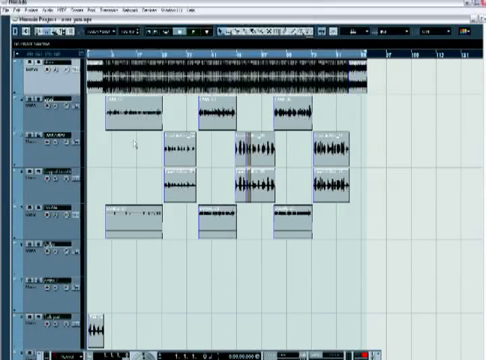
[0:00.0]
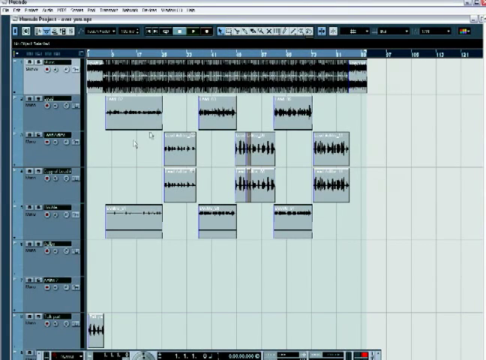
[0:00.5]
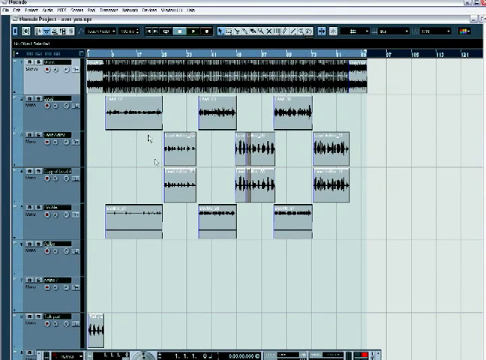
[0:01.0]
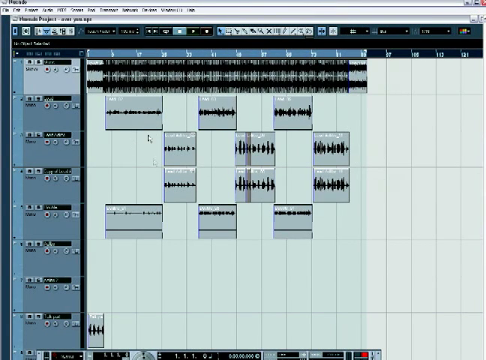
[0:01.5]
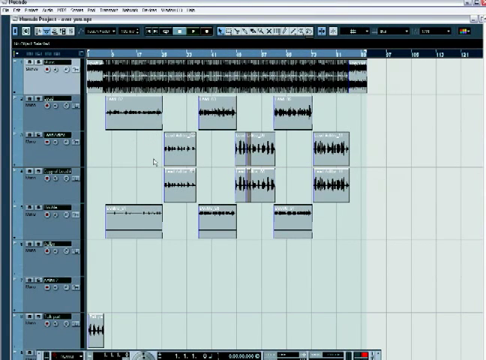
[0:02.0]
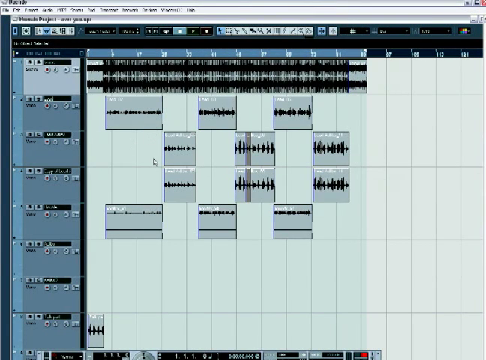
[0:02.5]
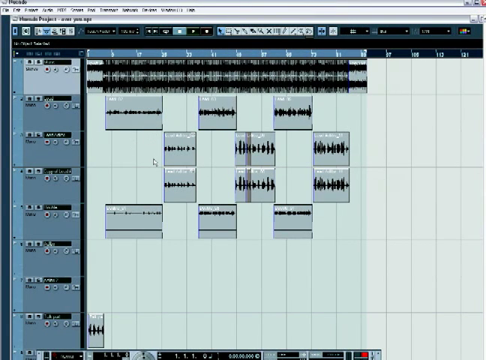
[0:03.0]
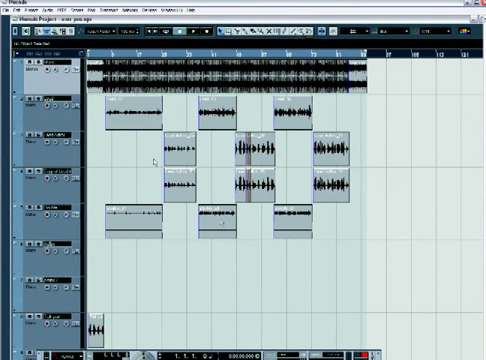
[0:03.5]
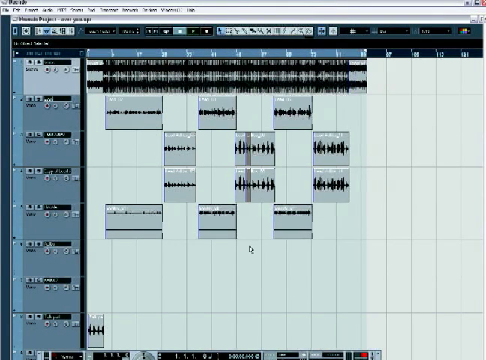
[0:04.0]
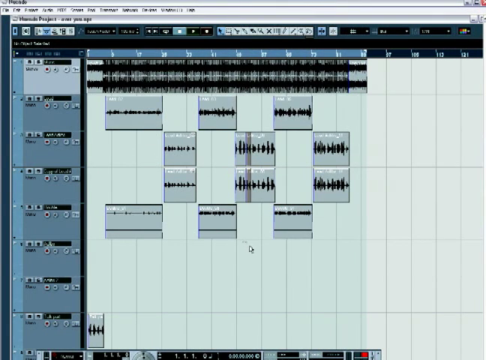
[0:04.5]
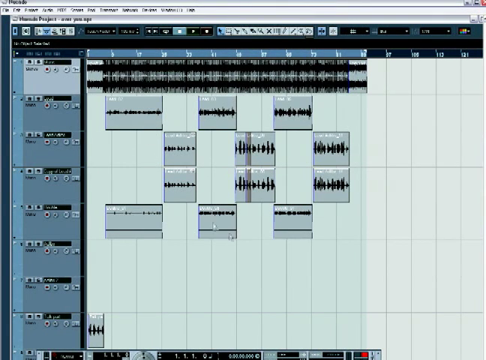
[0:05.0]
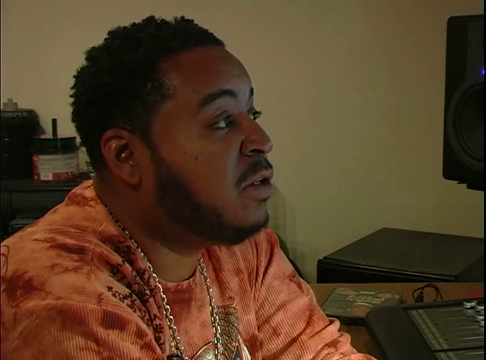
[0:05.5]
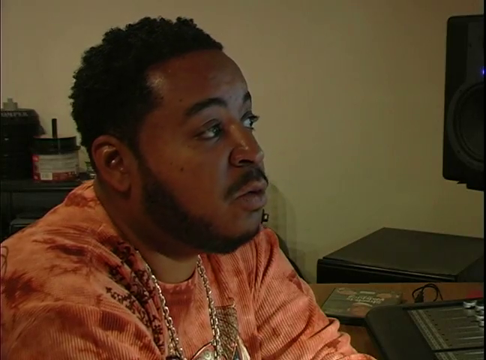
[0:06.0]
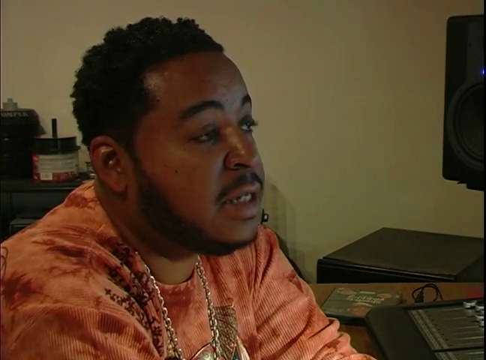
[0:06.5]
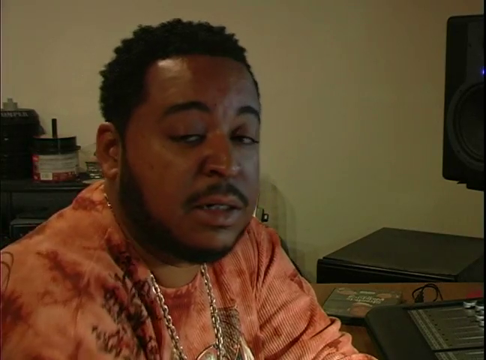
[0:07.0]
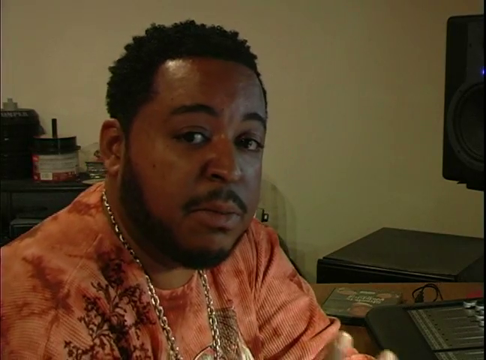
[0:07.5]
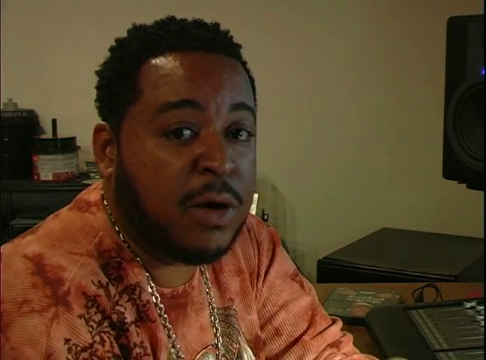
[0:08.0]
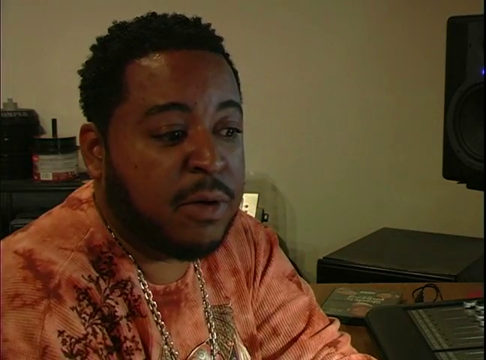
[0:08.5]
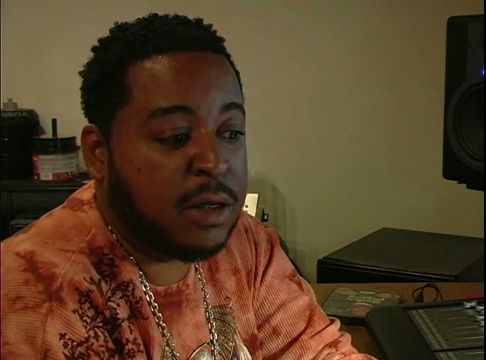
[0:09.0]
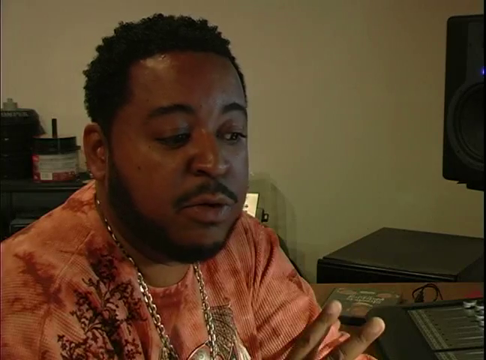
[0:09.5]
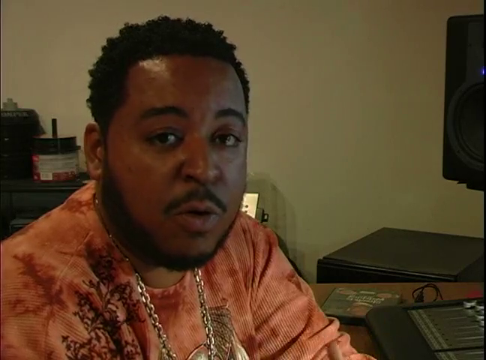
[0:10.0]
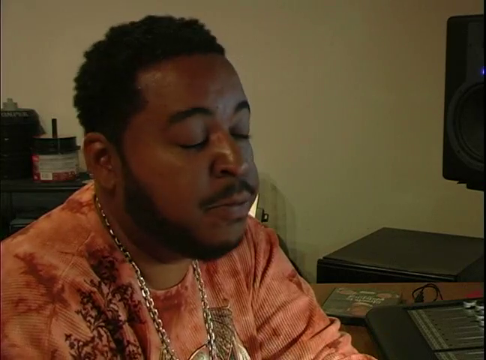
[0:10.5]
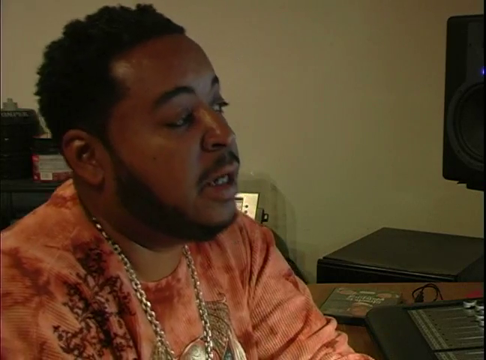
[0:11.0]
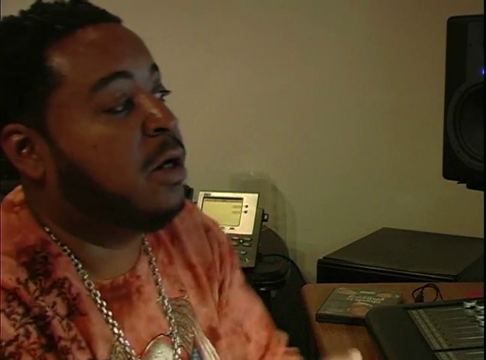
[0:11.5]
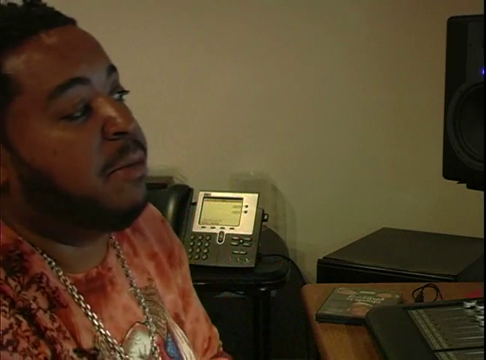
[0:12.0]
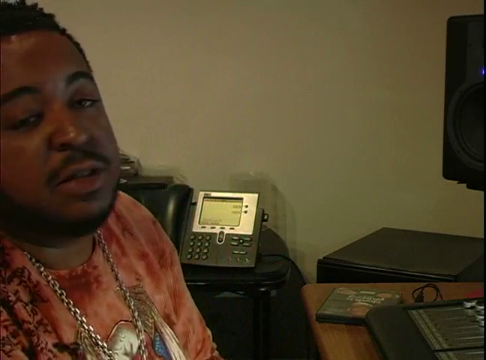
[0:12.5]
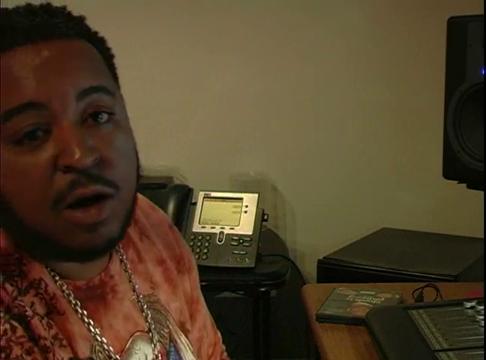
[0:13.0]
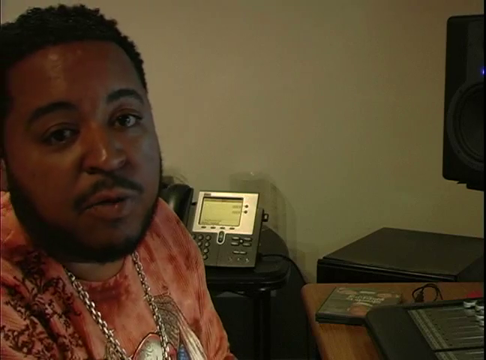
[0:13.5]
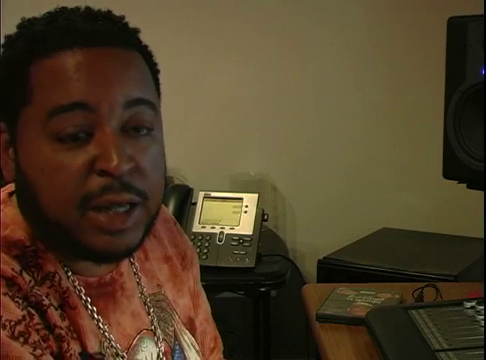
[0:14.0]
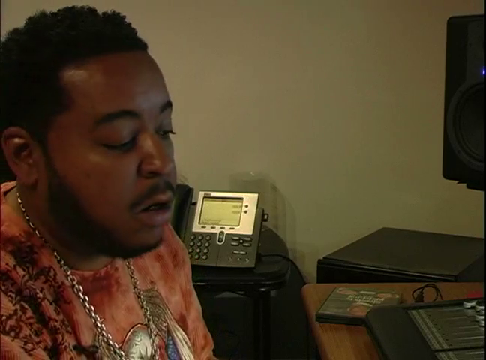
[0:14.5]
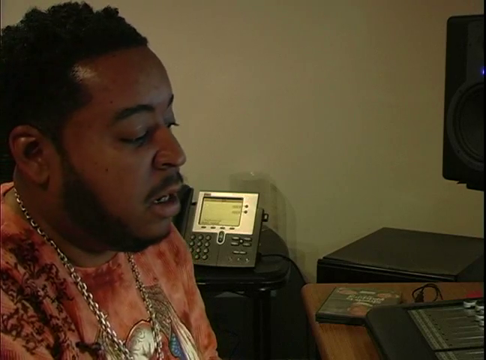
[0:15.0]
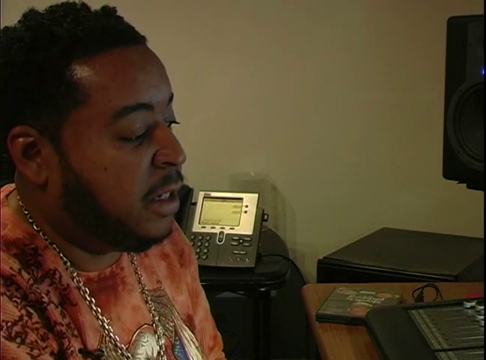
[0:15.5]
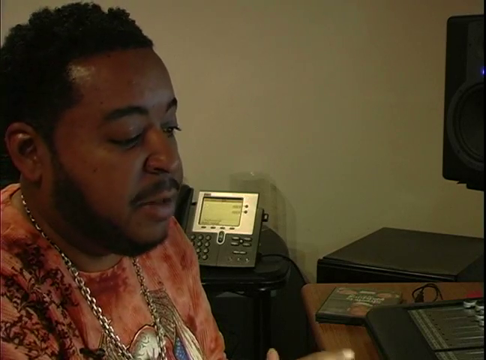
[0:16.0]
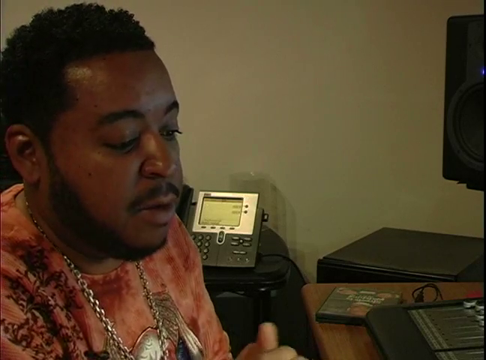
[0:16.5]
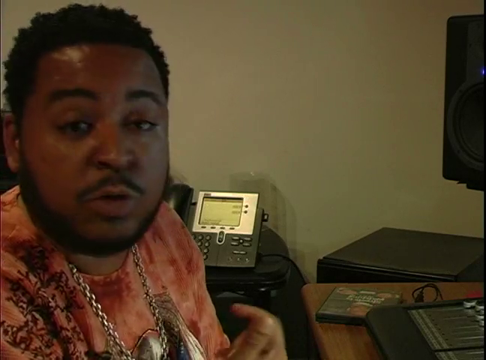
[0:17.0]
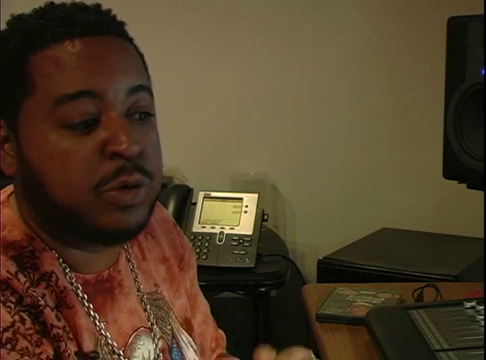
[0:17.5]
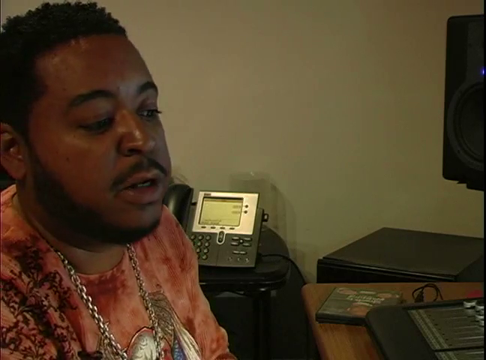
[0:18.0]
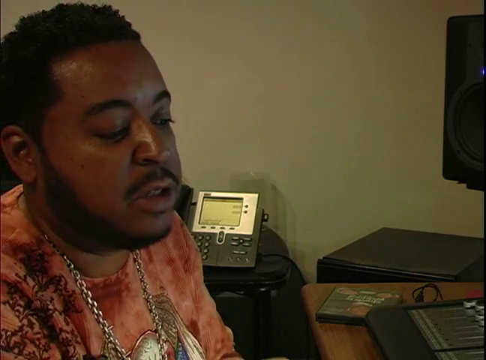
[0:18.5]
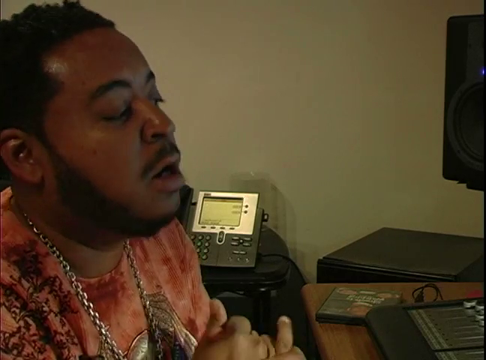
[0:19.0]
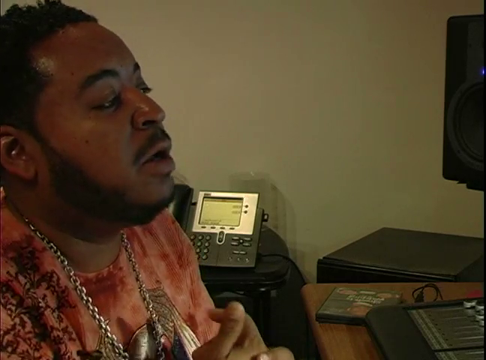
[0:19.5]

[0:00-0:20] A very blurry recording of a computer screen shows a music production program in which multiple different sound bytes are placed together in a music digital mixer, making some kind of sound or music. The program has a menu bar along the very top and uses heavy tints of blue, gray and green. The mouse cursor starts in the top left corner, then quickly teleports and flashes rather than visibly moving, jumping downwards toward the third mix track and then down to the fifth mix track, which is empty. The video cuts to a man looking at a computer screen inside a home office. He wears an orange corduroy long-sleeved shirt with the sleeves pulled up and a silver chain necklace, and he has a beard and mustache. He looks right toward the computer screen and then straight forward toward the camera. He talks while moving his right hand up and down with his fingers splayed out. On a wooden table in front of him there is a mix board with various knobs, and to the left a DVD in its box. He keeps talking to the camera, leaning back in his chair, which is on the left, with his body facing the right.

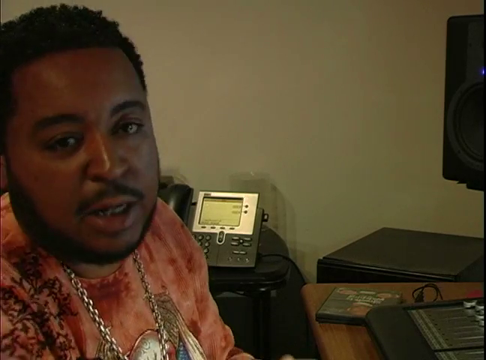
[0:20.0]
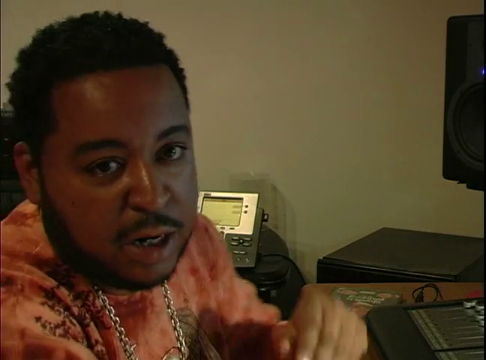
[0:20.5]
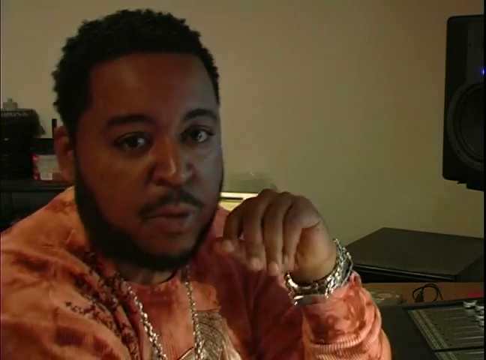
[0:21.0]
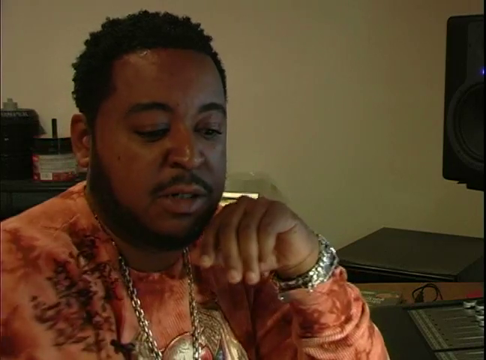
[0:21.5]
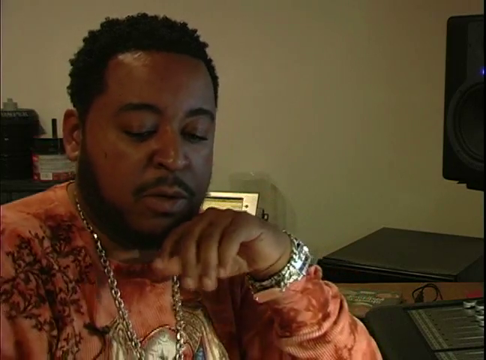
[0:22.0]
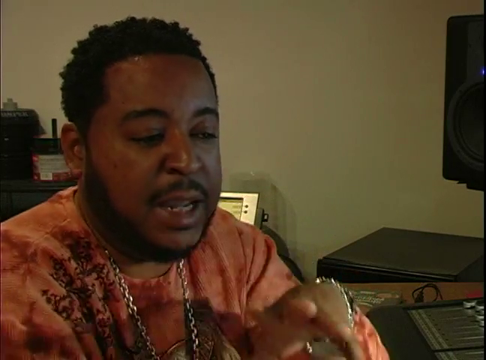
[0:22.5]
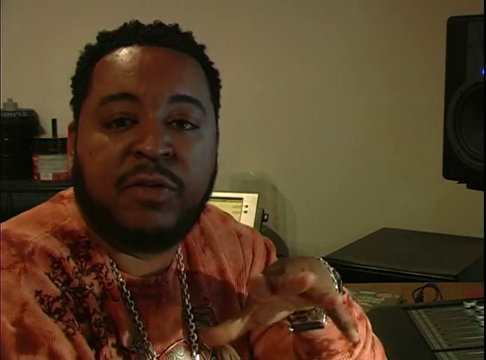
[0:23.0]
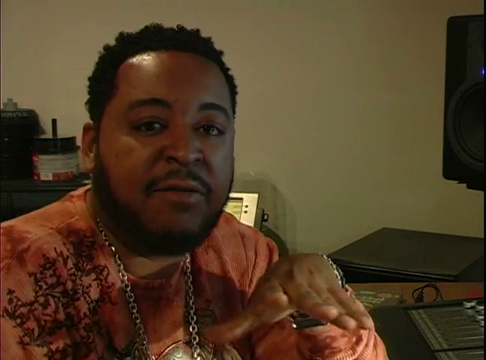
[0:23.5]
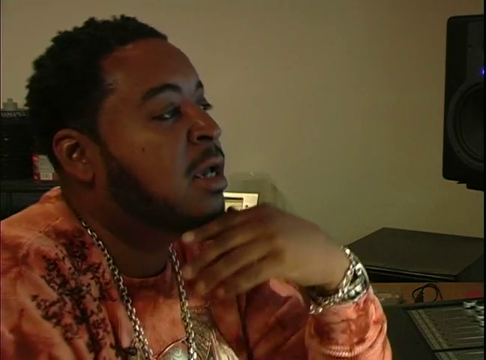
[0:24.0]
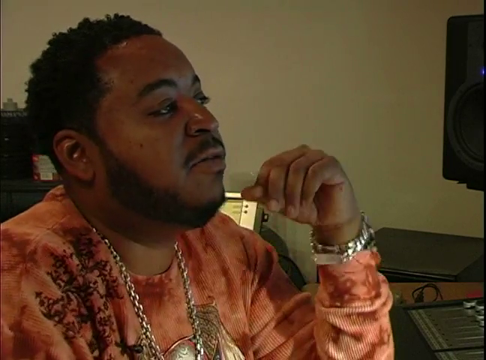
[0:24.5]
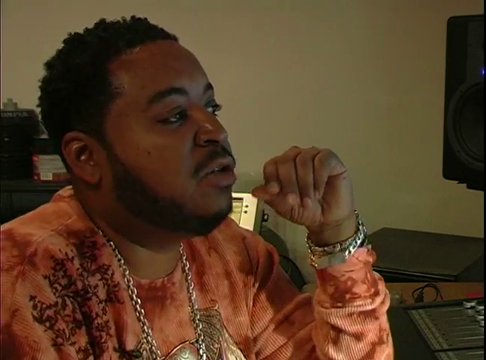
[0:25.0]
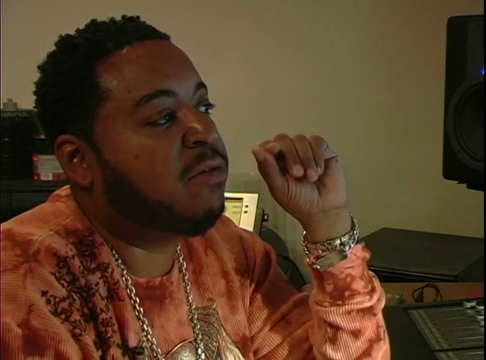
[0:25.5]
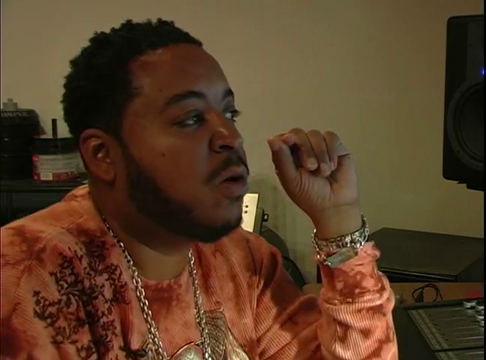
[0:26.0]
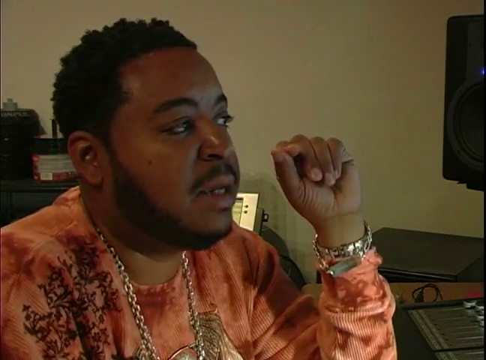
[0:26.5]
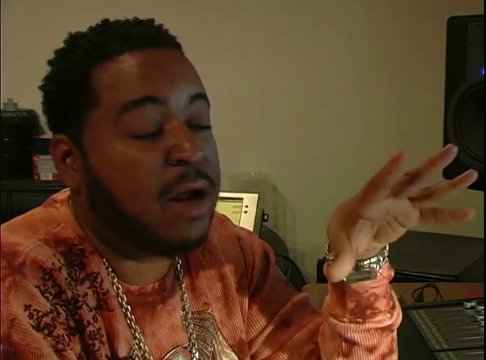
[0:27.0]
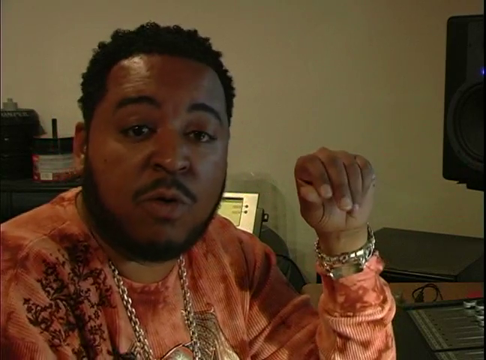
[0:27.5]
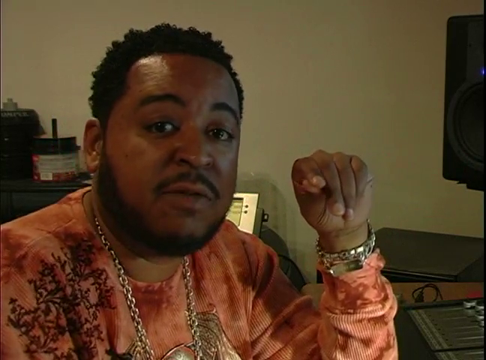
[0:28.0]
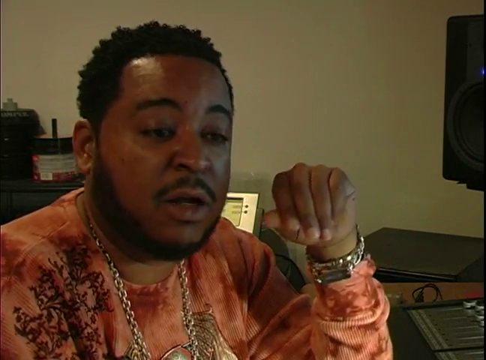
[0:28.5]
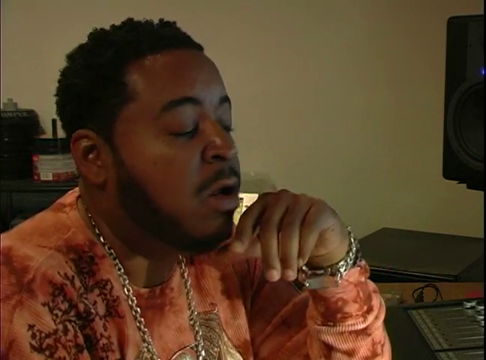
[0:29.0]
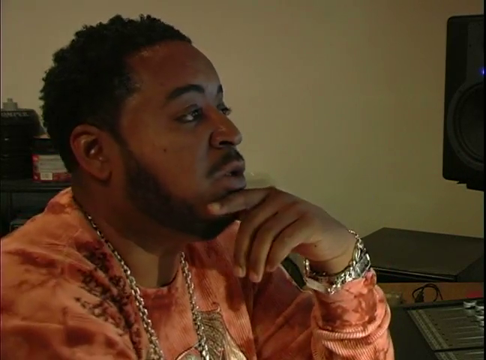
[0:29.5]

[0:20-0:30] A man talks into a camera while sitting in a chair, his body facing toward the right of the camera. He wears an orange corduroy long-sleeve shirt and a silver chain necklace, and he has a beard and mustache. Behind him there is a professional teleconference-style phone, and the walls are painted white. In front of him is a light brown wooden desk with a DVD case and a mixer with various knobs. He rests his left elbow on the desk, revealing a silver chain bracelet and a silver wristwatch on his left wrist. He motions with his hand toward the camera, then looks to the right where his computer monitor is. He opens his hand and splays his fingers outward once, looks back toward the camera, and then looks back toward the computer screen on the right.